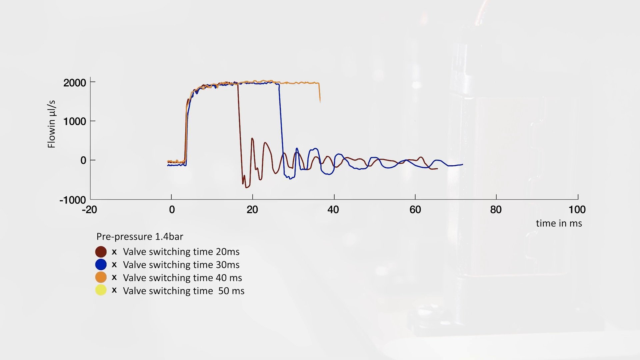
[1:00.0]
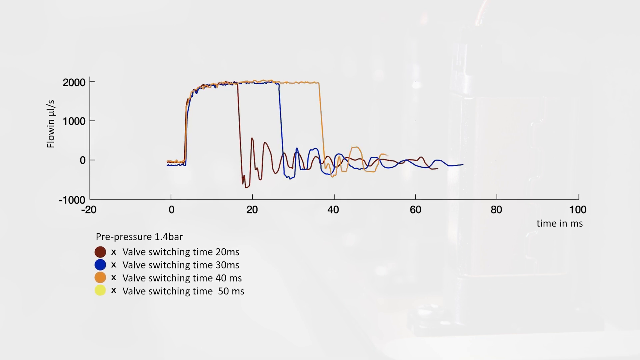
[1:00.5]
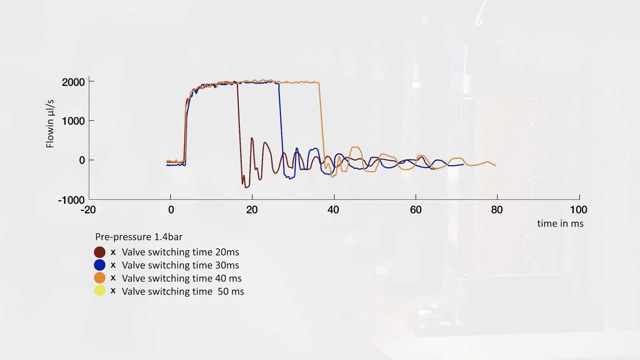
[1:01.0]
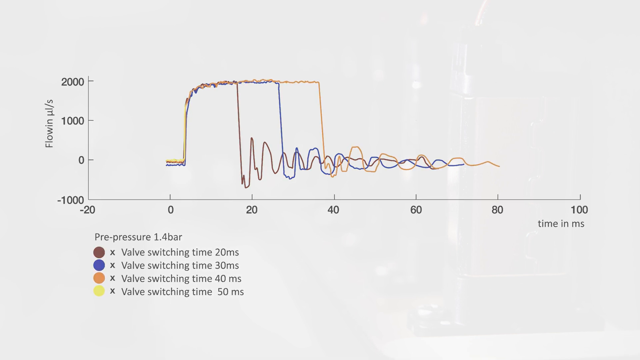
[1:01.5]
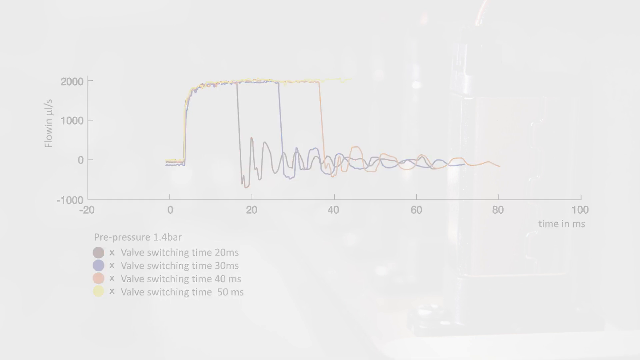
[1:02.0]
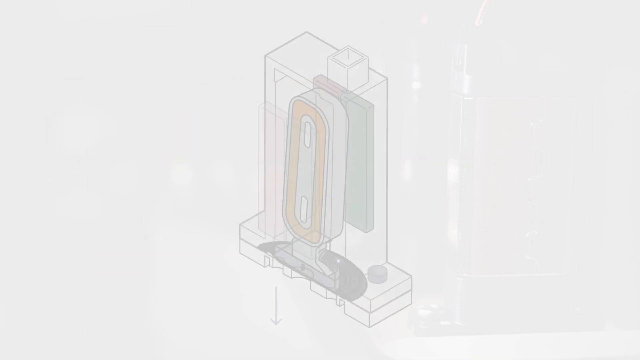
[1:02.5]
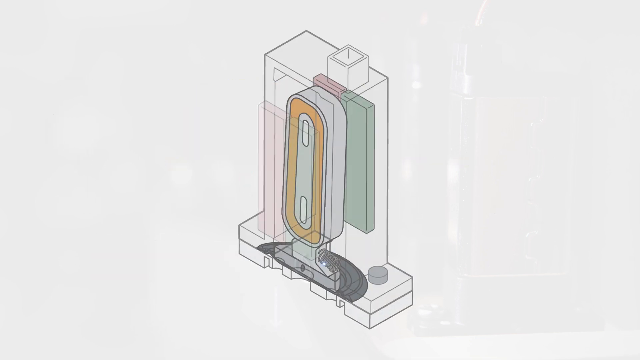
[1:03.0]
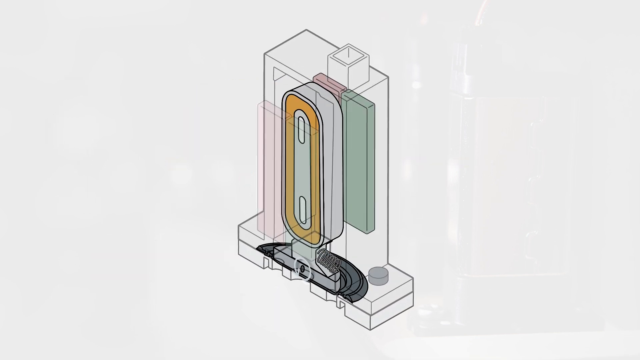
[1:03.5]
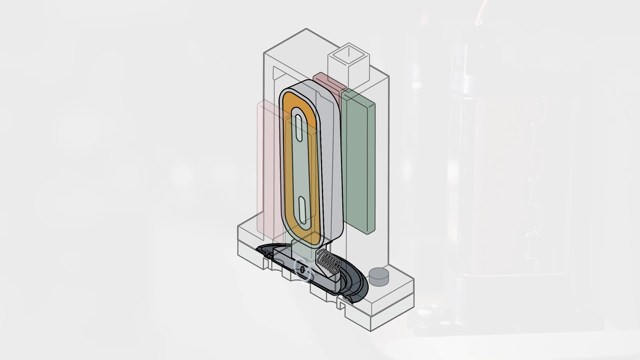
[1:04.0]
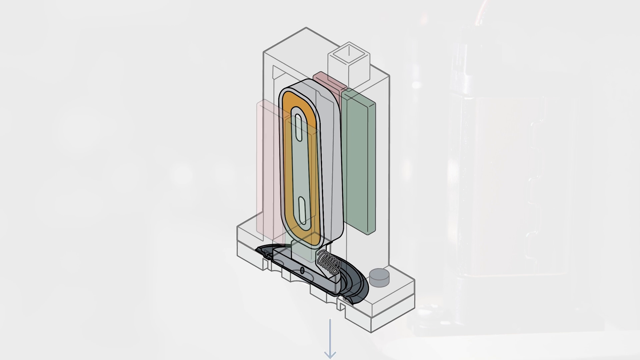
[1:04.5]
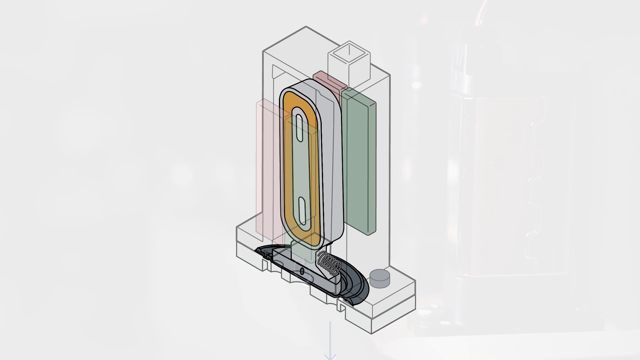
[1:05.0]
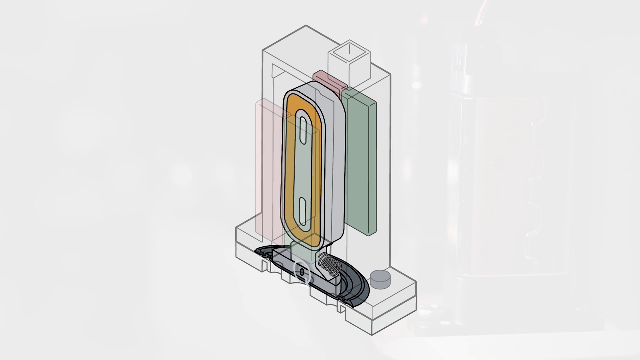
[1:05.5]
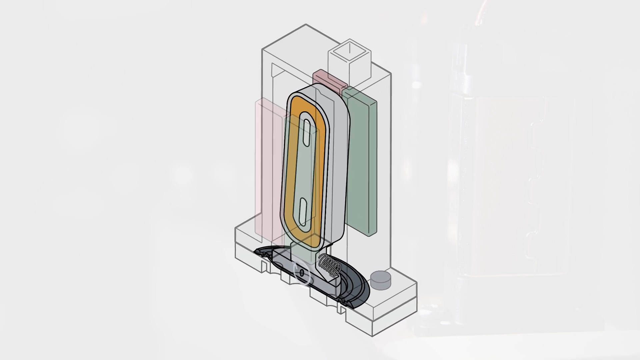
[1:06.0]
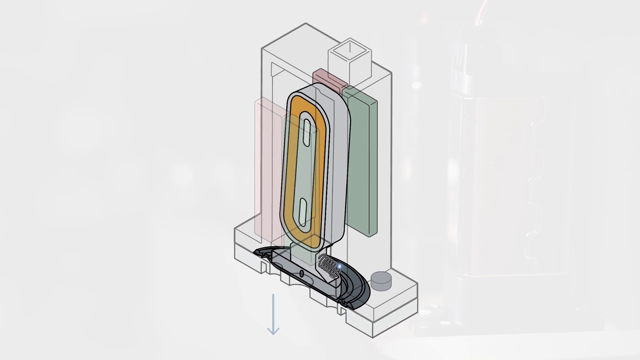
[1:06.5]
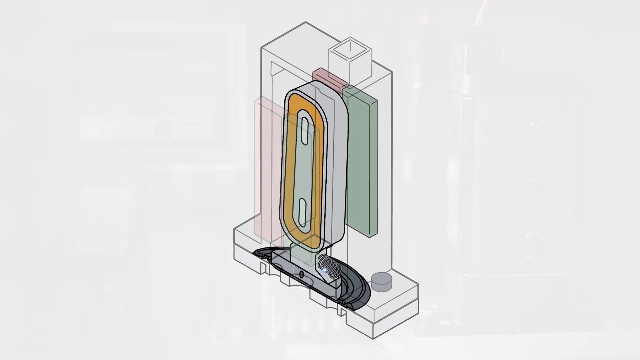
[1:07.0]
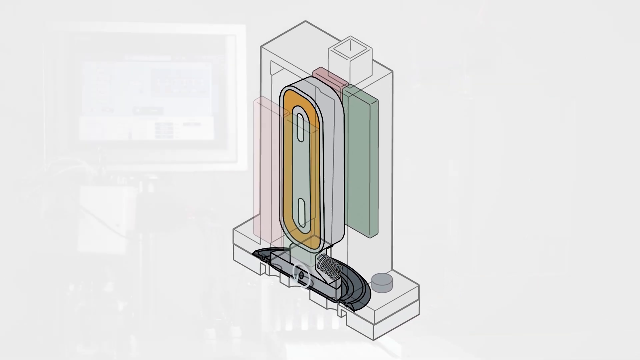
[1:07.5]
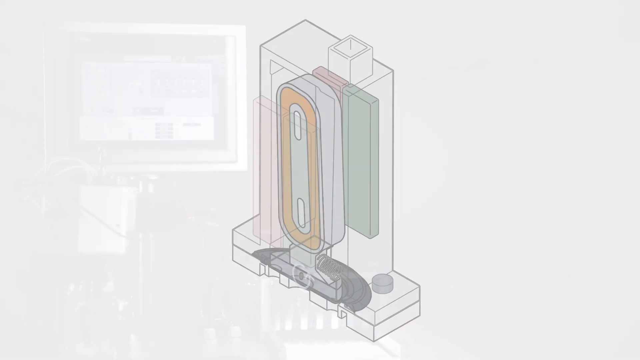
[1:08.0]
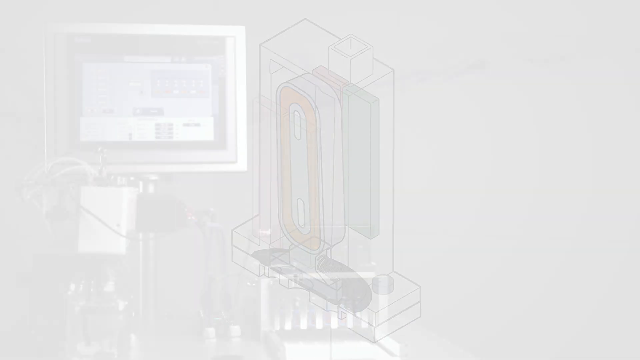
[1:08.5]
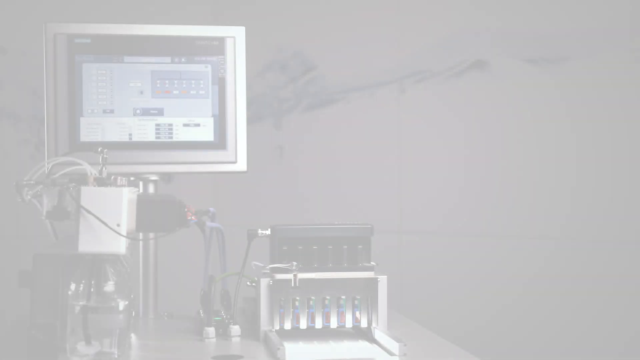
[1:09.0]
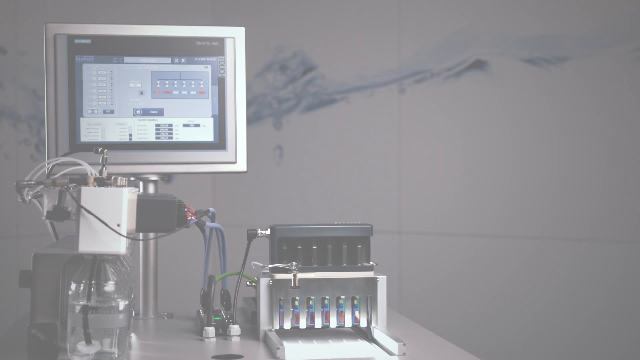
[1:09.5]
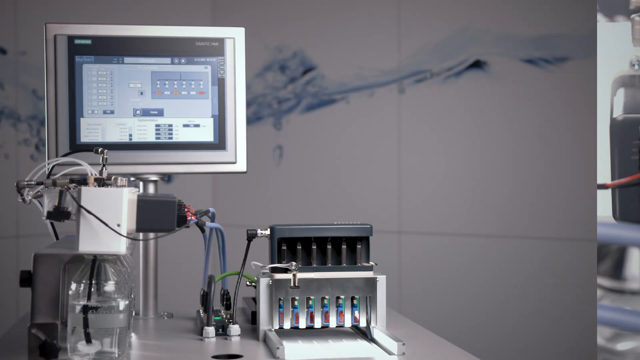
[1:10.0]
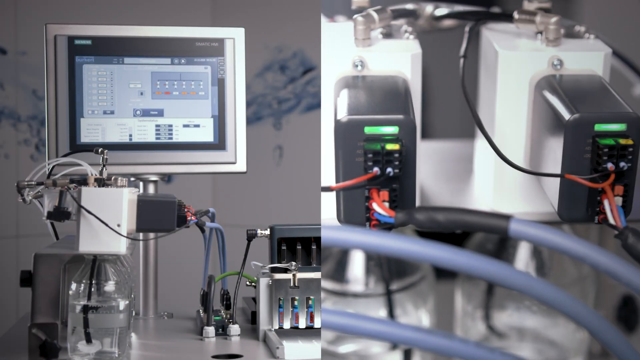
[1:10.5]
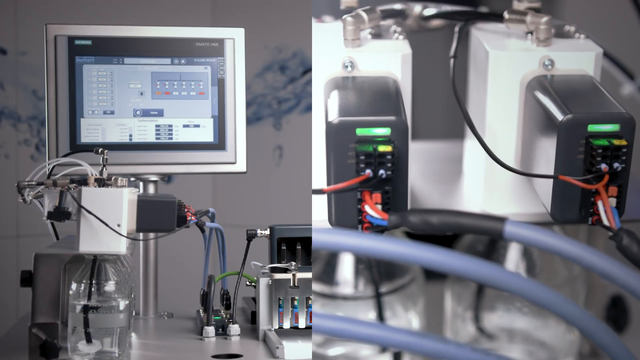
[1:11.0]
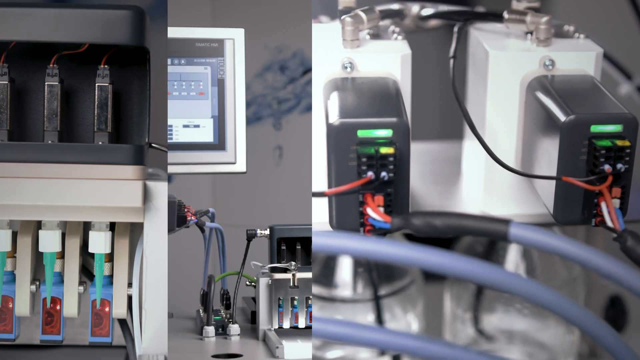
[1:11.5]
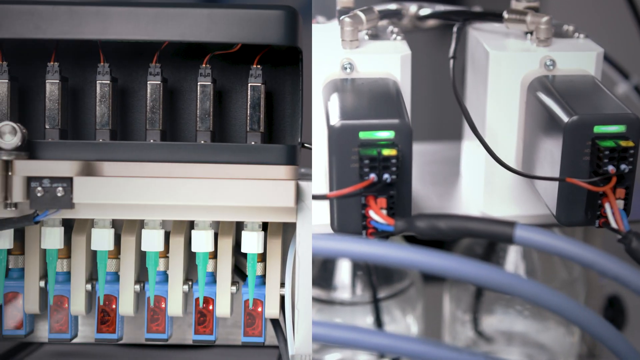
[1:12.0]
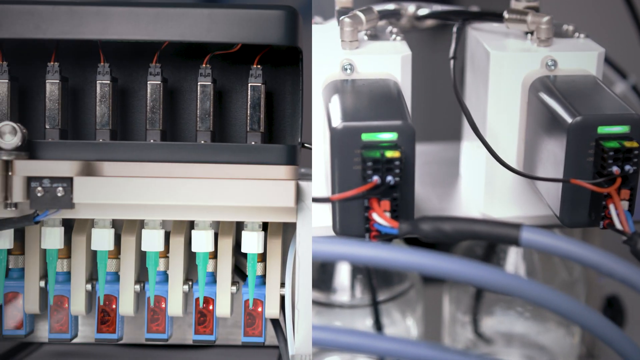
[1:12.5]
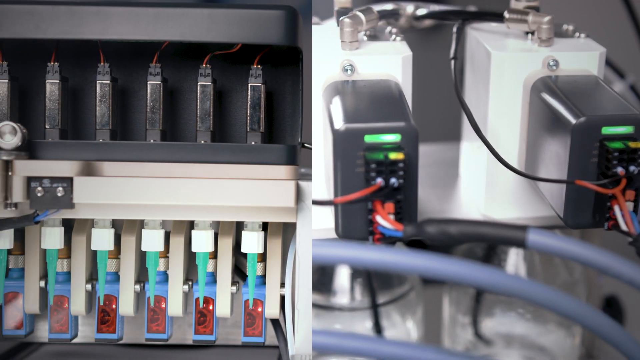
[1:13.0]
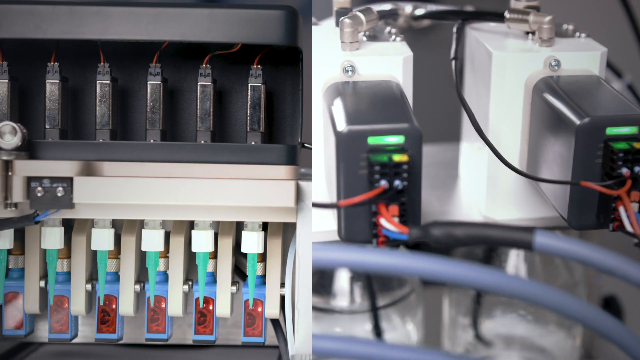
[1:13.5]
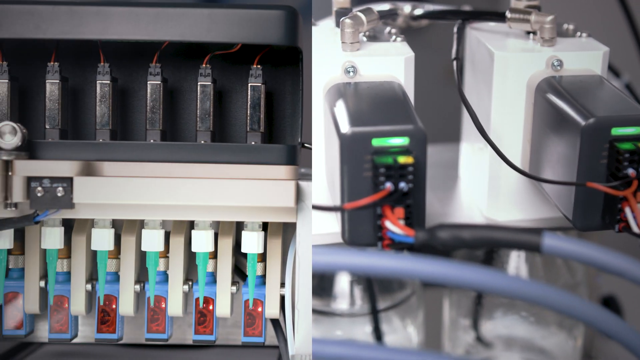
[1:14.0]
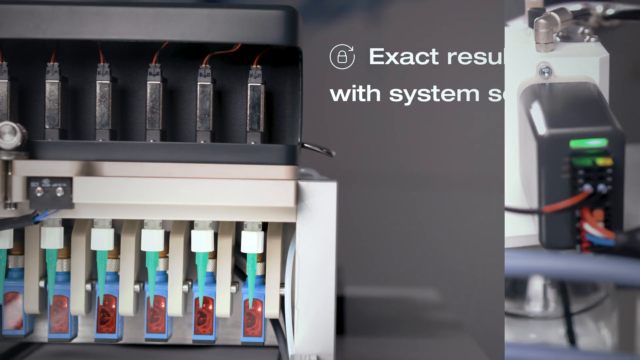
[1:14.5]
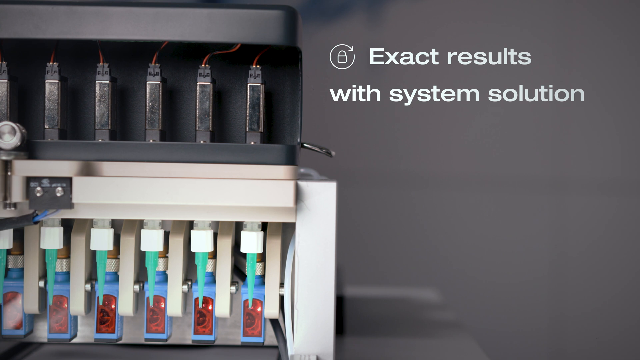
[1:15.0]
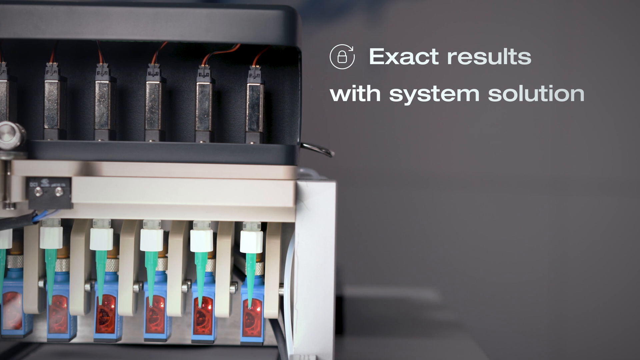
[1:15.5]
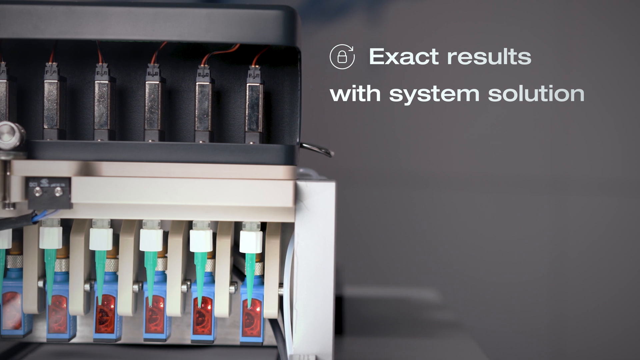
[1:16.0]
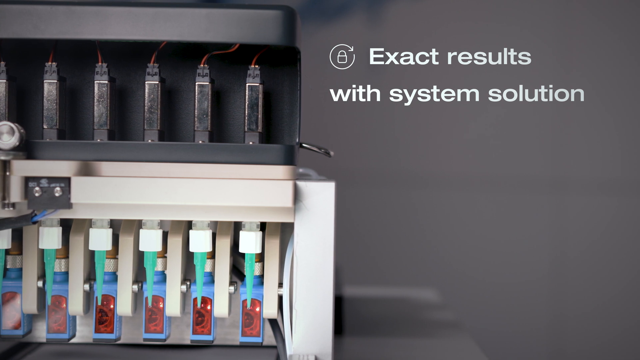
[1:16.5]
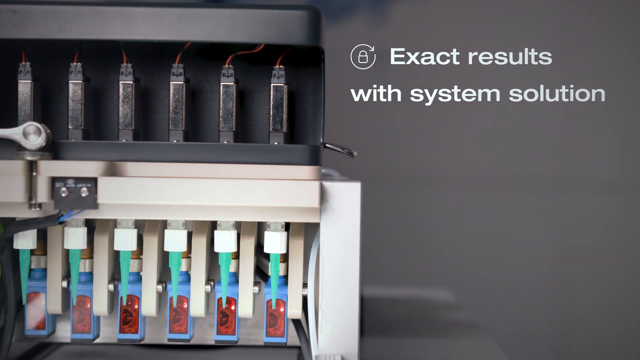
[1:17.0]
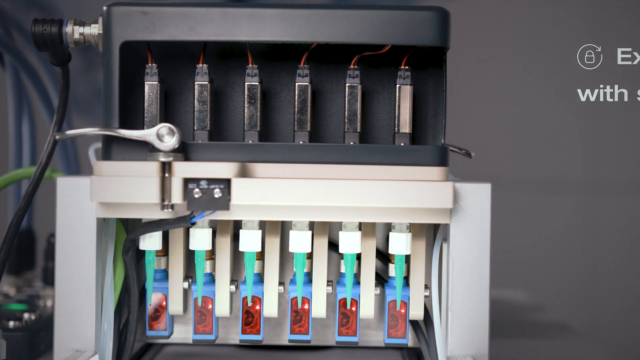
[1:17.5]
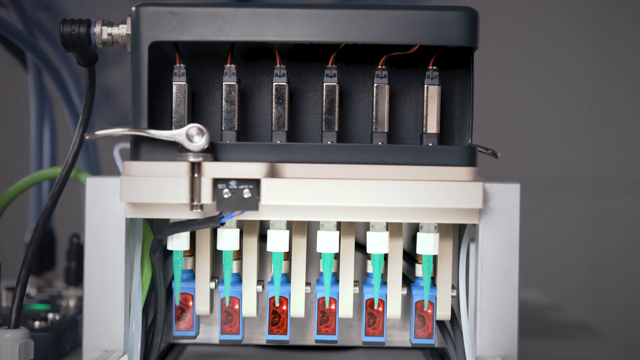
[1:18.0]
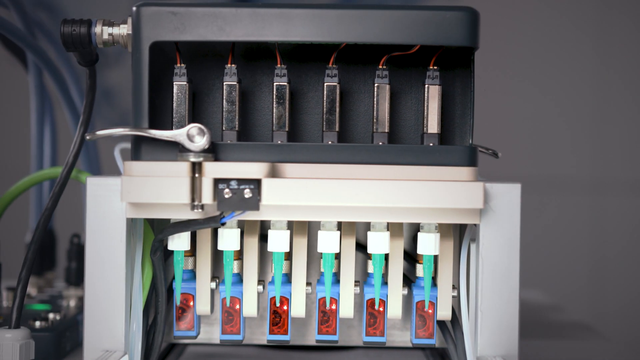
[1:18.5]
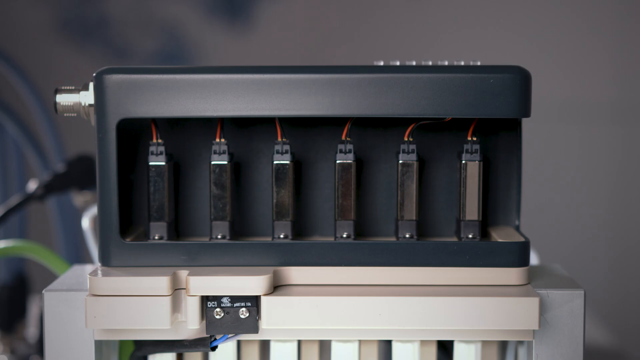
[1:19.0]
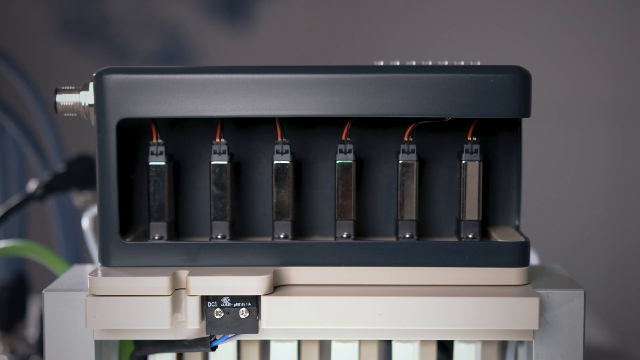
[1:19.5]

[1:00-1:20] A line graph showing the flow rate opens the scene, possibly for a device that puts out little droplets of DNA, with different colors. A diagram follows, showing an oval inside a device that kind of moves from left to right, almost like a clock. The text "exact results with system solution" appears, and a device makes little droplets; a little droplet comes down as the device tips to either the left or the right. Something kind of brown and green helps support the machine in the background. The actual machines are then shown, with red wires, blue wires and a black plug-in, followed by the back of the machine. A split screen shows both sides of the machine at once, one picture on the left and one on the right.